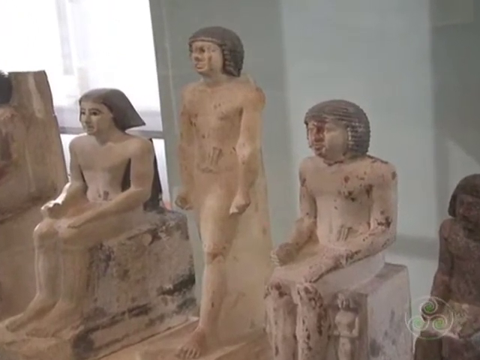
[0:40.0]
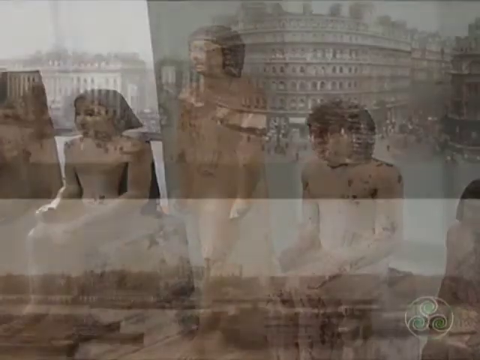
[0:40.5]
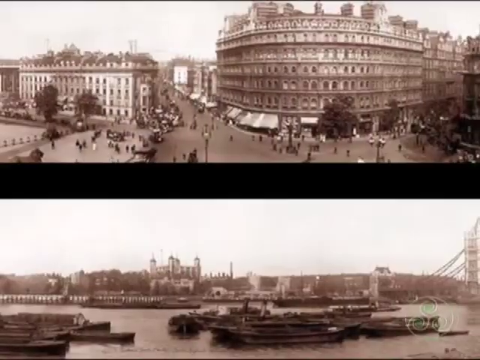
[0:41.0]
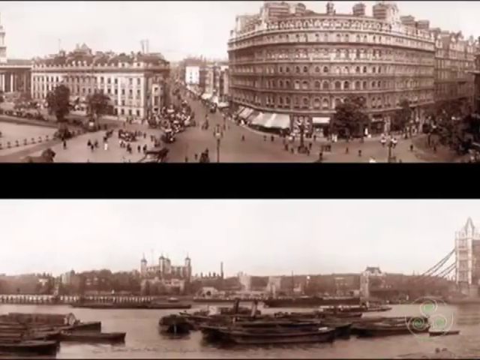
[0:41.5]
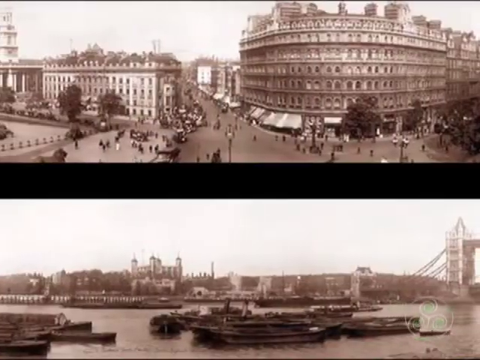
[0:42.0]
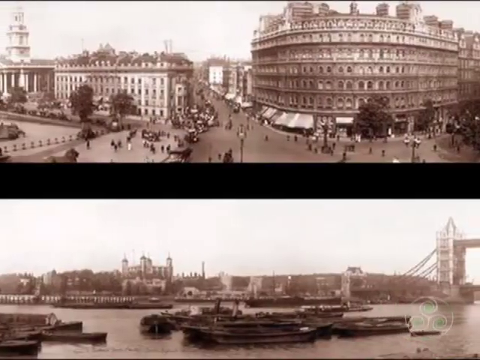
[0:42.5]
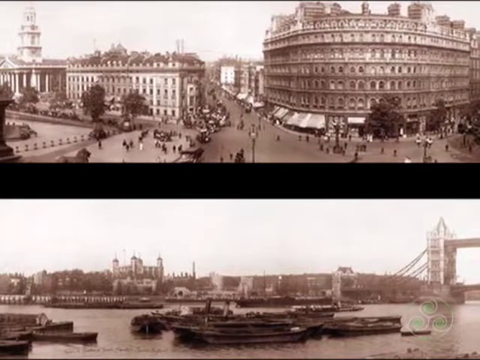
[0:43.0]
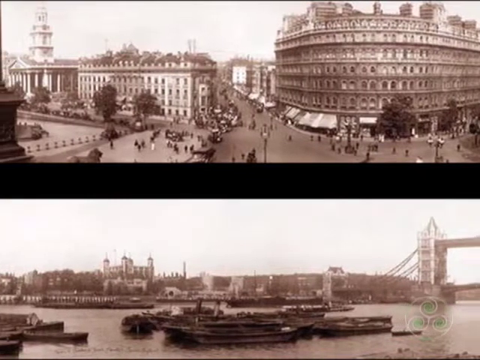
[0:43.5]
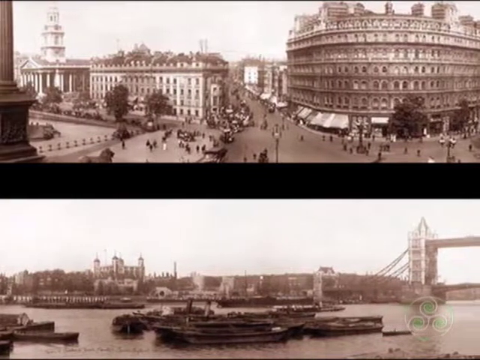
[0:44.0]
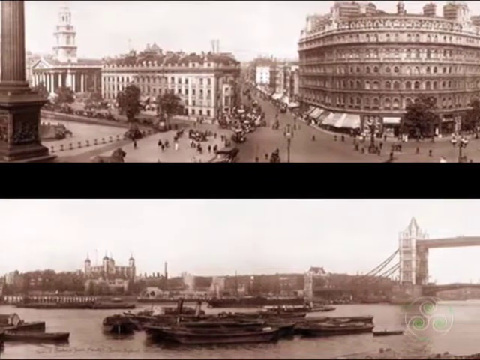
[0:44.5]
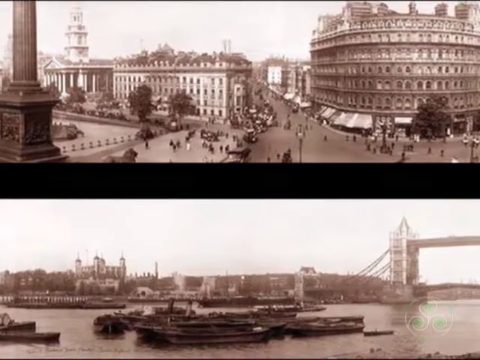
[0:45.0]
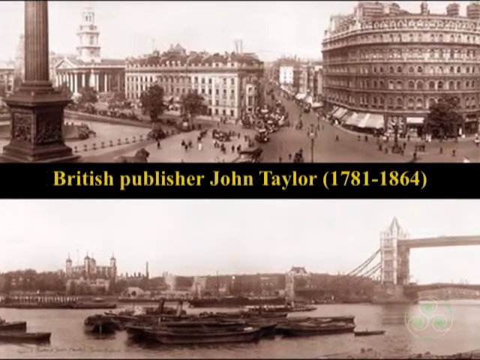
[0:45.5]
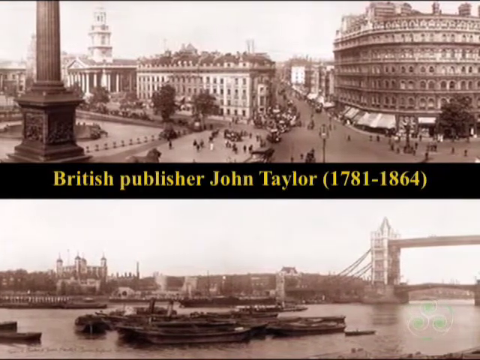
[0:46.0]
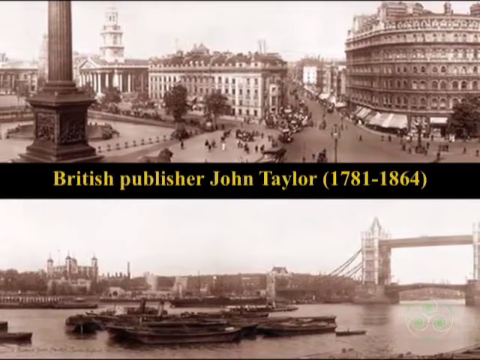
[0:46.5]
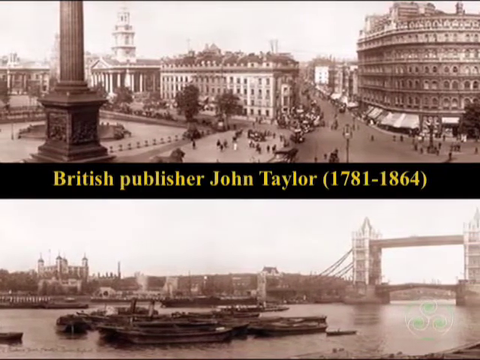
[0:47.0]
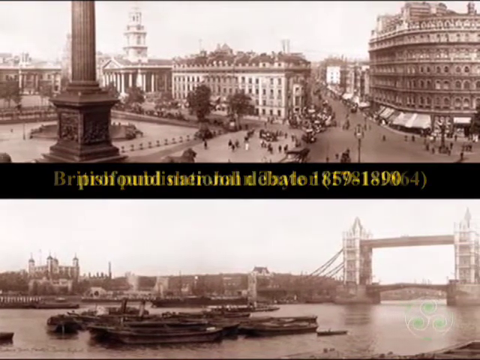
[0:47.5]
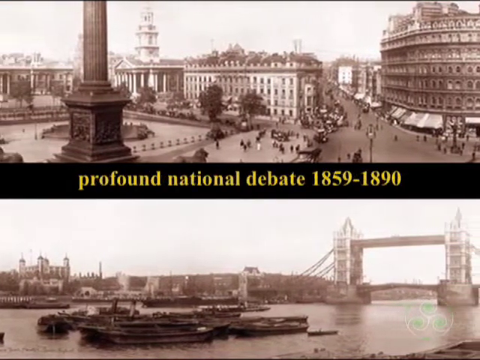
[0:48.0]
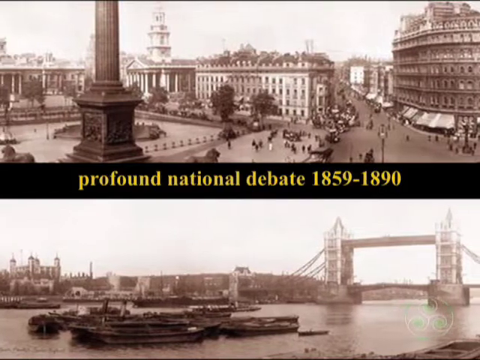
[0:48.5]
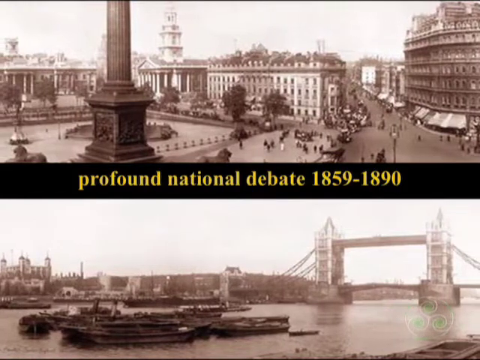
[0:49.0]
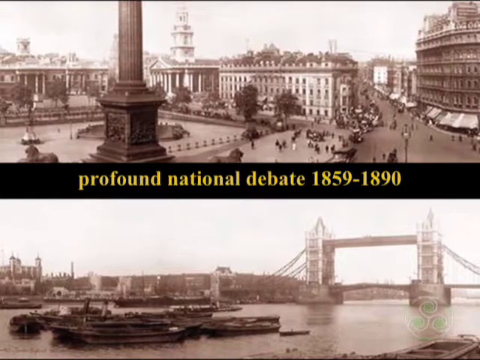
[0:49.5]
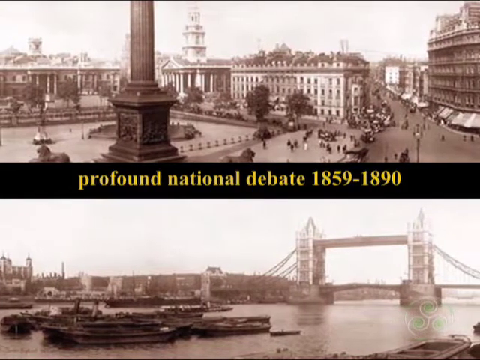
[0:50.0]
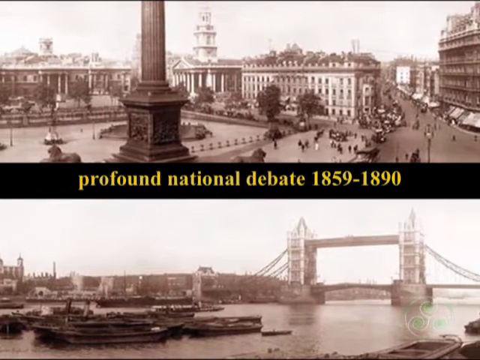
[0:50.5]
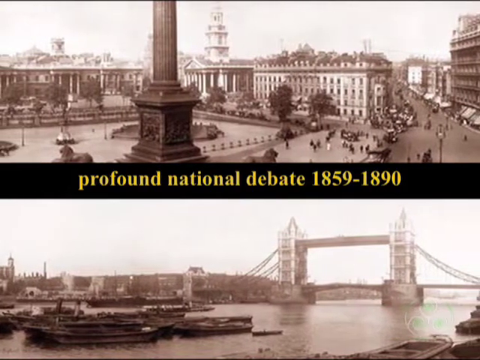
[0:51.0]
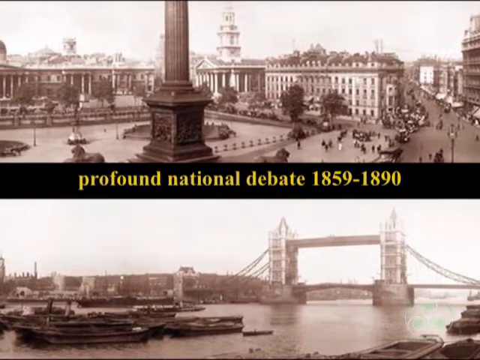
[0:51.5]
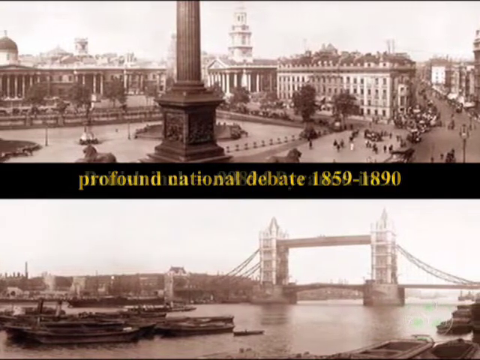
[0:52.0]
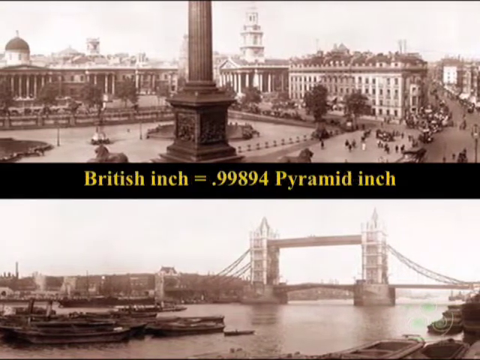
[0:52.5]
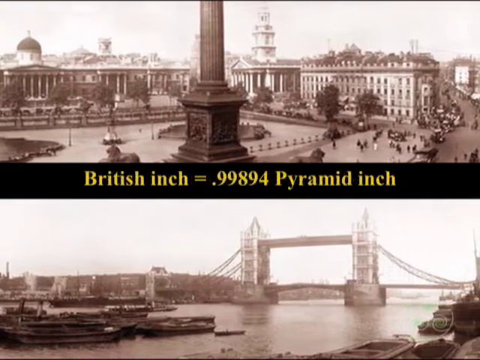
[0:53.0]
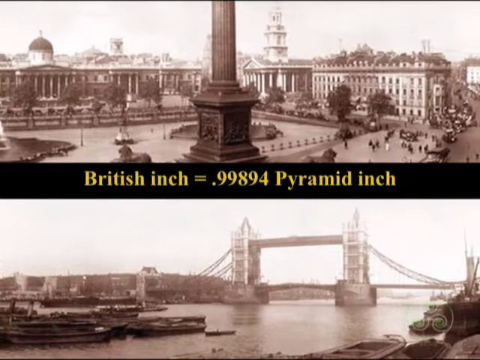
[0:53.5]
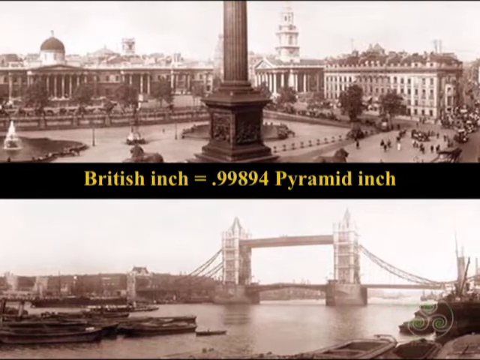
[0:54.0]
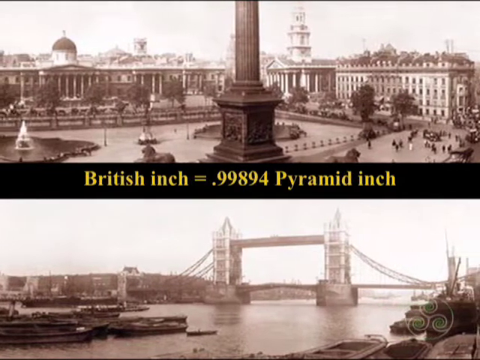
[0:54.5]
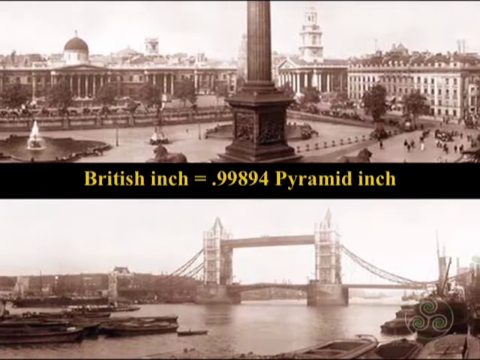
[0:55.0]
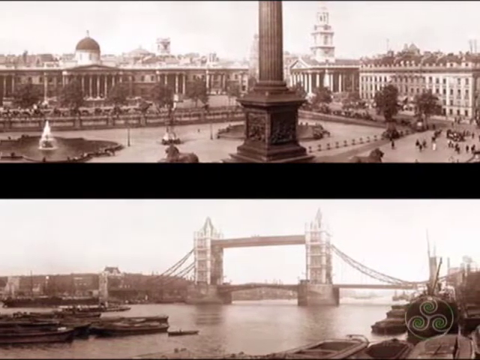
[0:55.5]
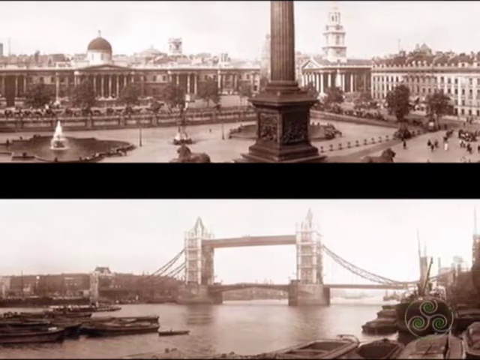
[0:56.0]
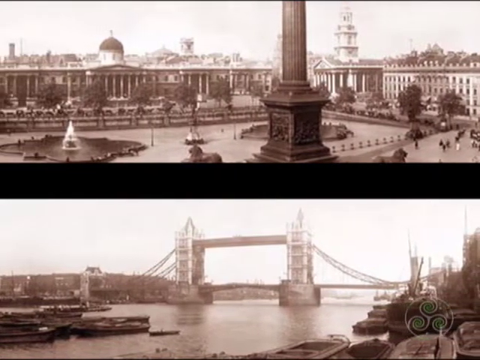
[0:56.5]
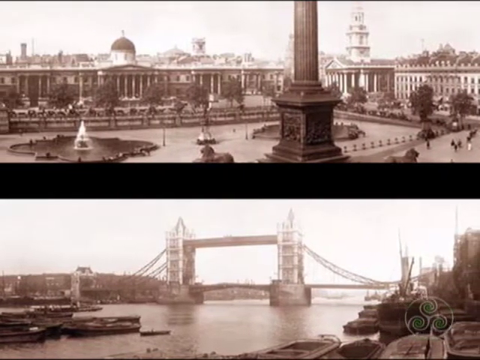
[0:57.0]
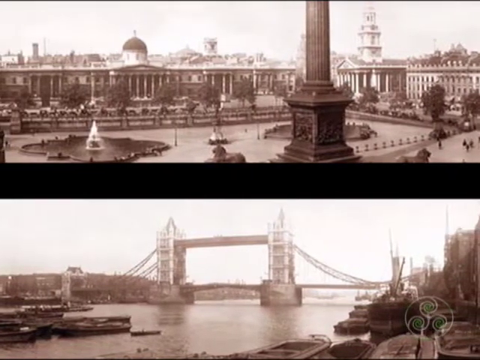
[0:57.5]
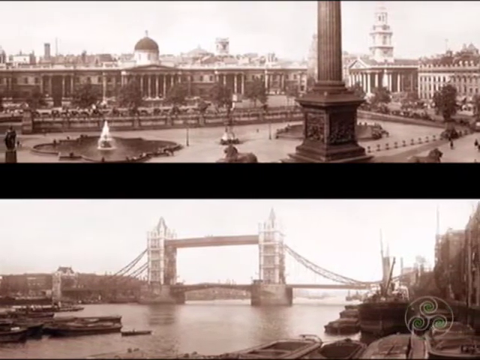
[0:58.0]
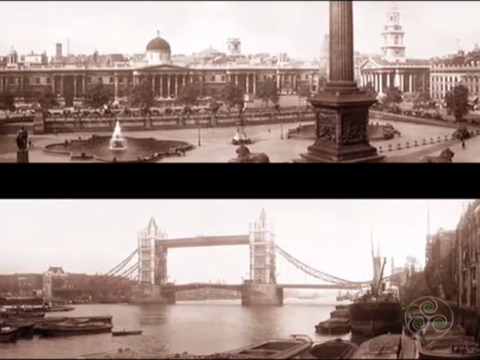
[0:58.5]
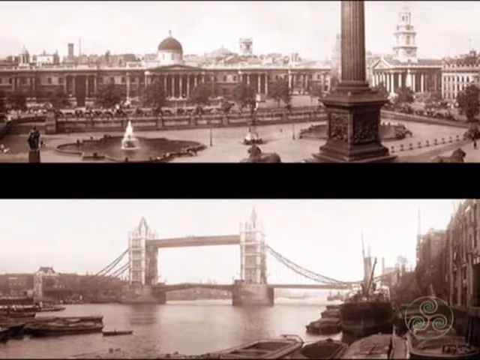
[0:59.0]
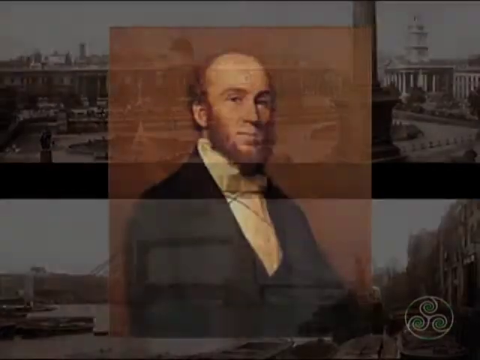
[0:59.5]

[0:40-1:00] The pyramids are shown at the beginning, and then two skylines of London appear, one on the top of the screen and one on the bottom. Iconic London bridges are shown. The video then transitions back to statues of pharaohs from ancient Egypt.